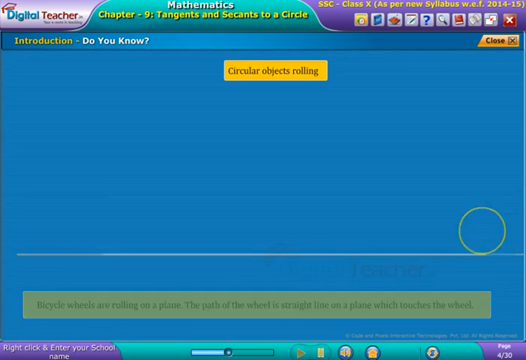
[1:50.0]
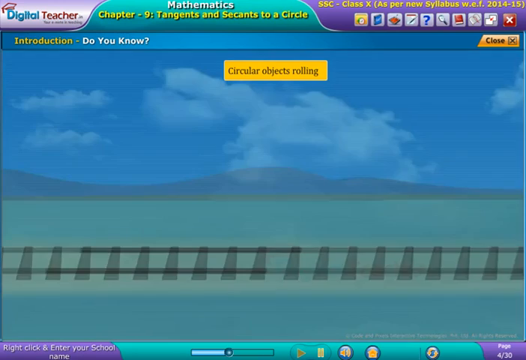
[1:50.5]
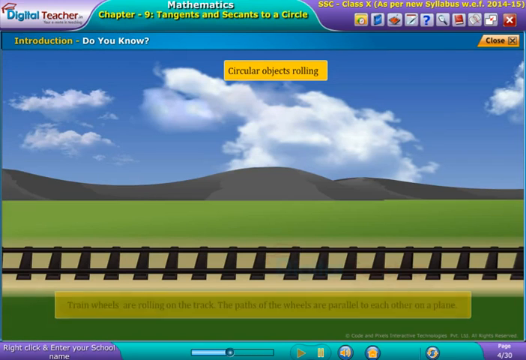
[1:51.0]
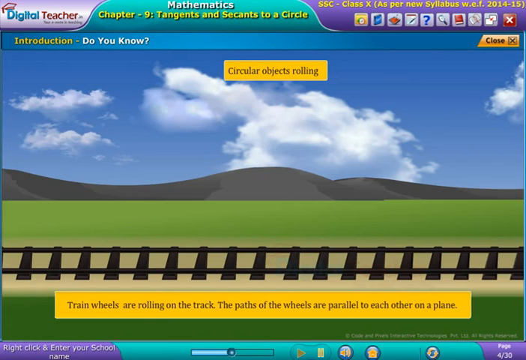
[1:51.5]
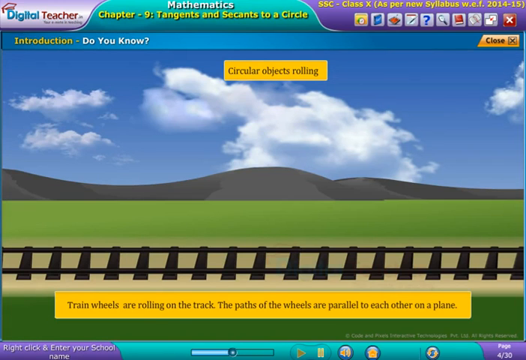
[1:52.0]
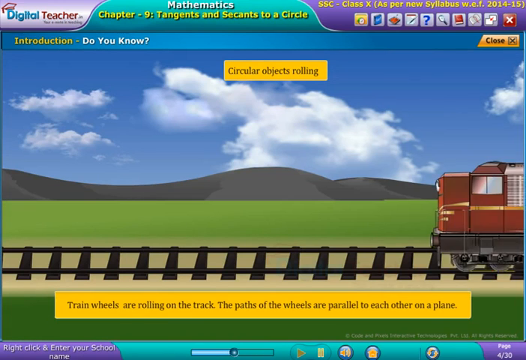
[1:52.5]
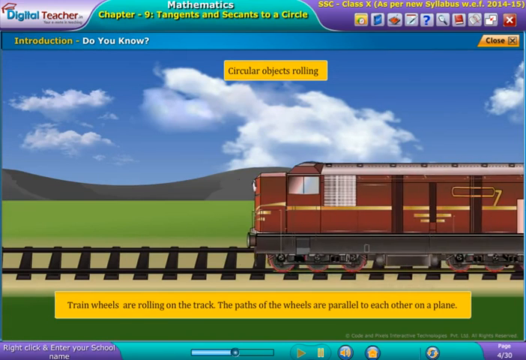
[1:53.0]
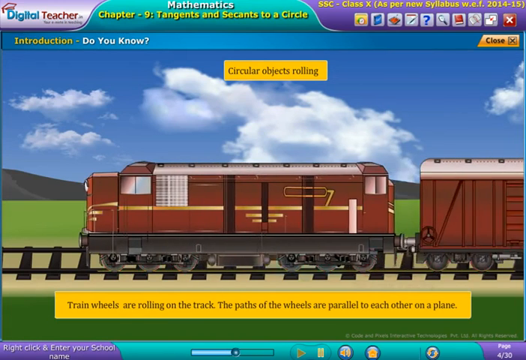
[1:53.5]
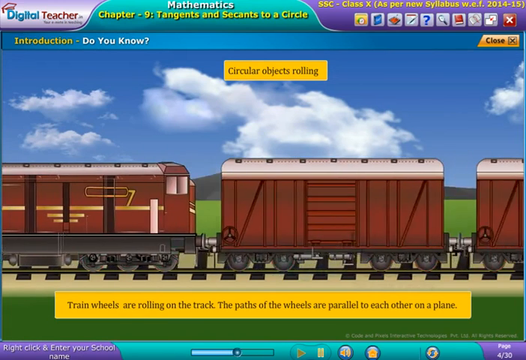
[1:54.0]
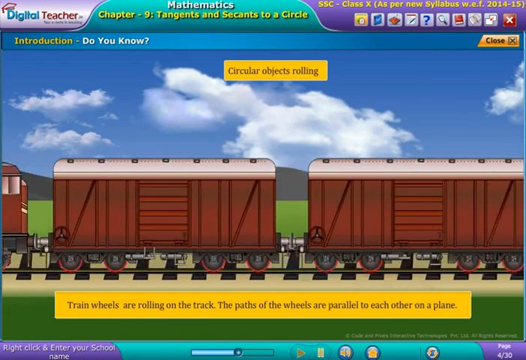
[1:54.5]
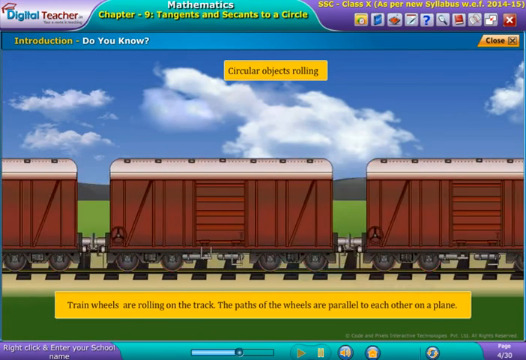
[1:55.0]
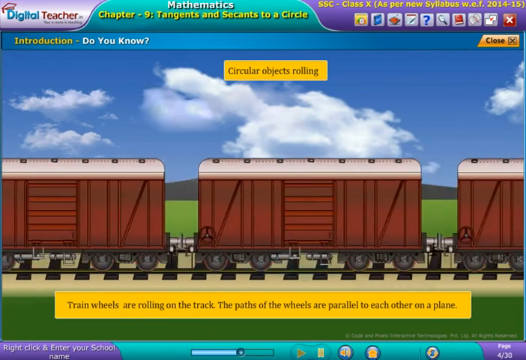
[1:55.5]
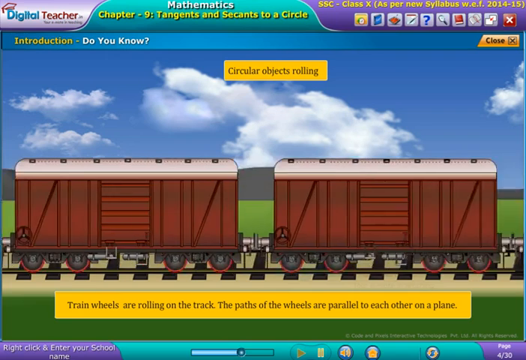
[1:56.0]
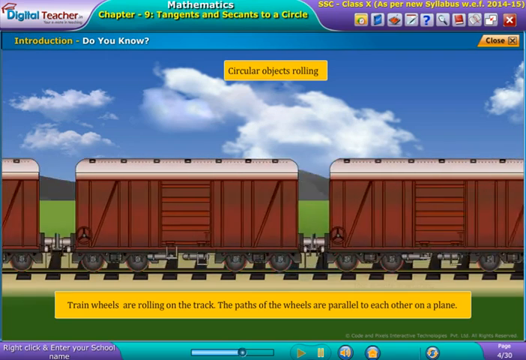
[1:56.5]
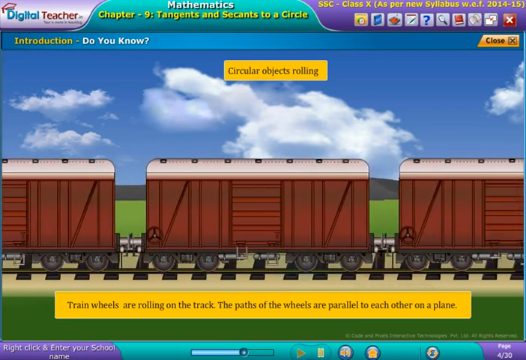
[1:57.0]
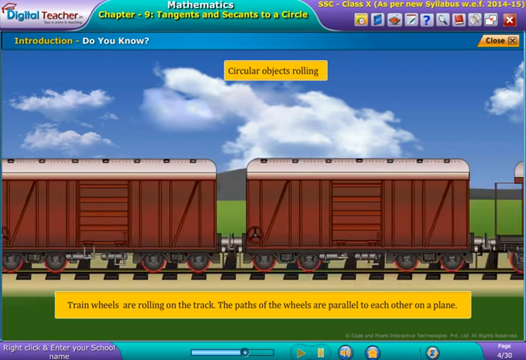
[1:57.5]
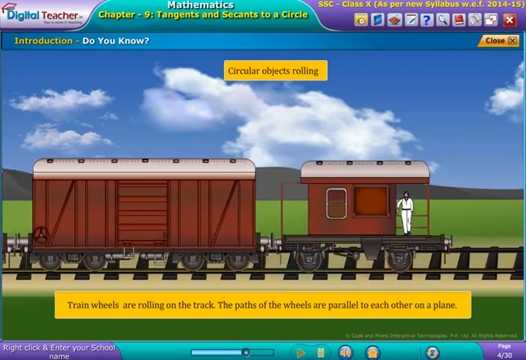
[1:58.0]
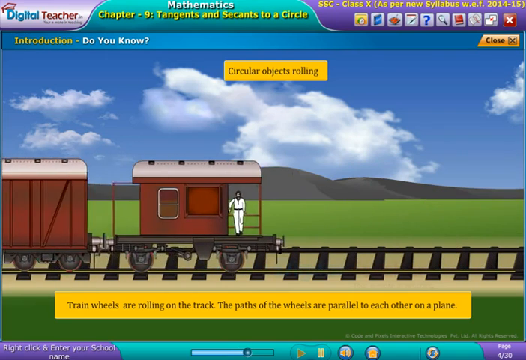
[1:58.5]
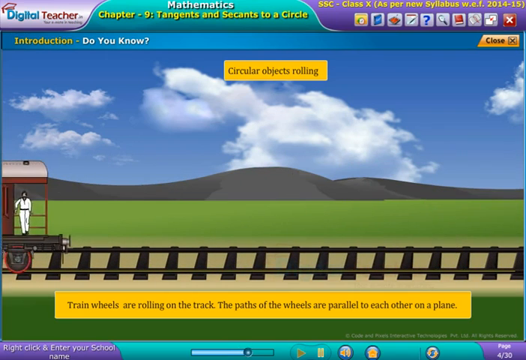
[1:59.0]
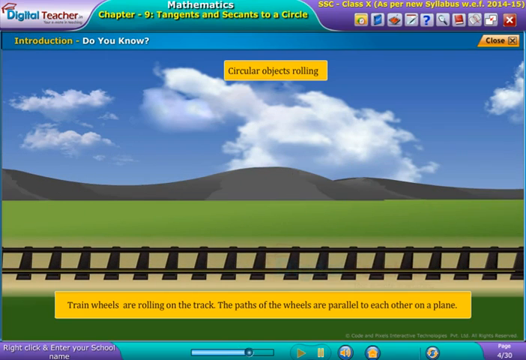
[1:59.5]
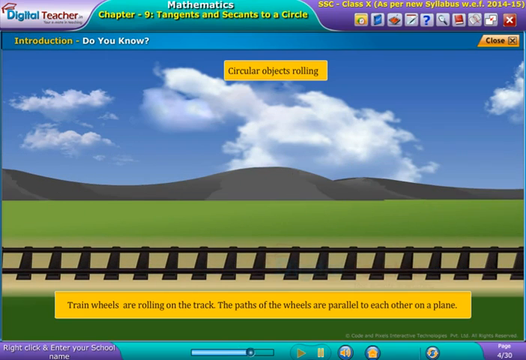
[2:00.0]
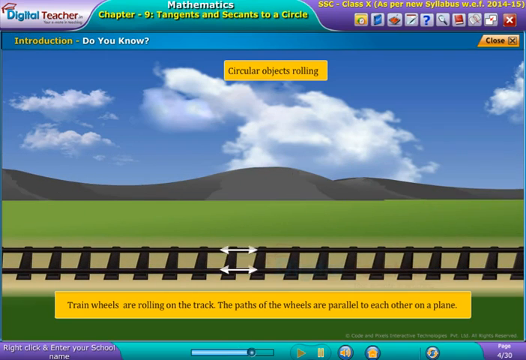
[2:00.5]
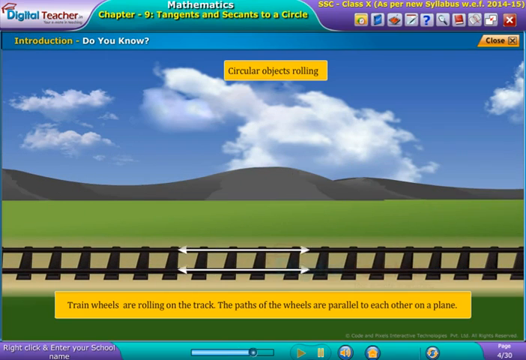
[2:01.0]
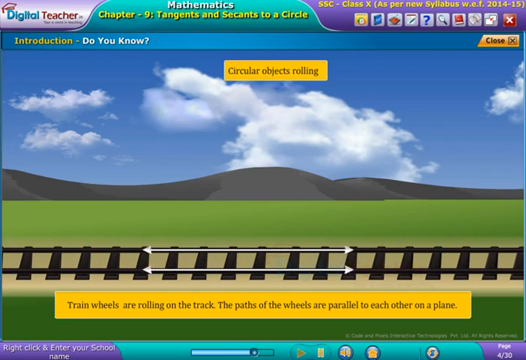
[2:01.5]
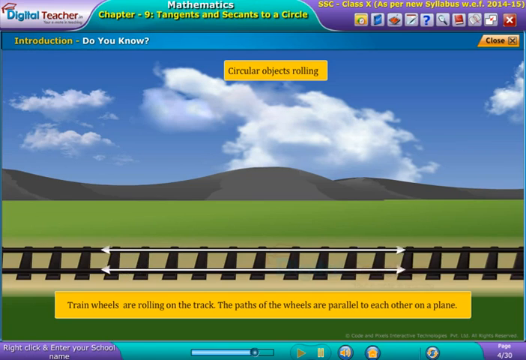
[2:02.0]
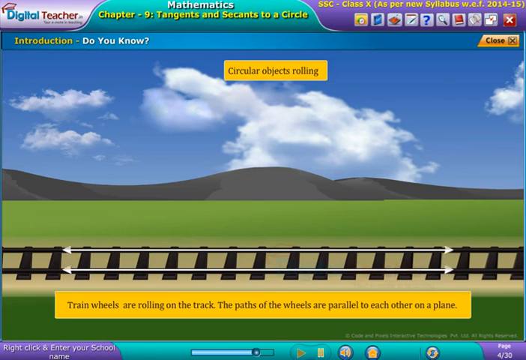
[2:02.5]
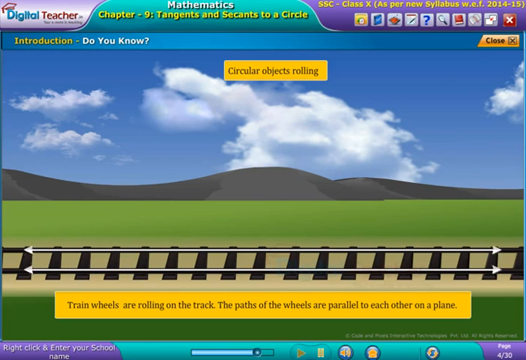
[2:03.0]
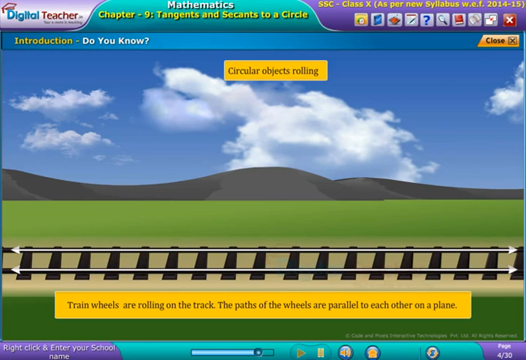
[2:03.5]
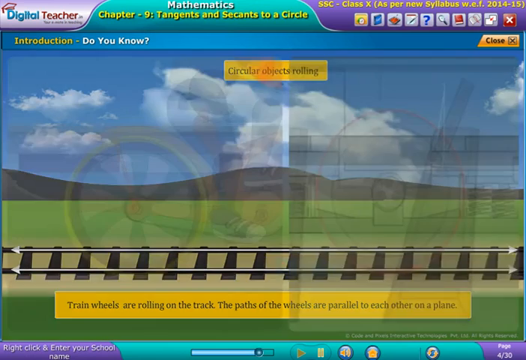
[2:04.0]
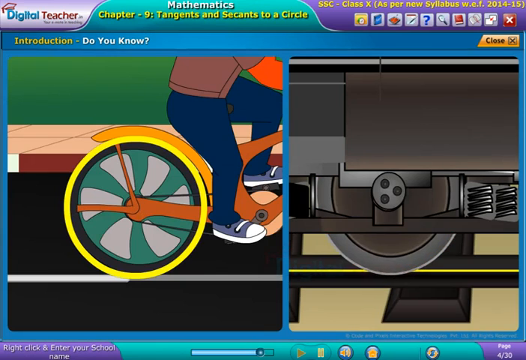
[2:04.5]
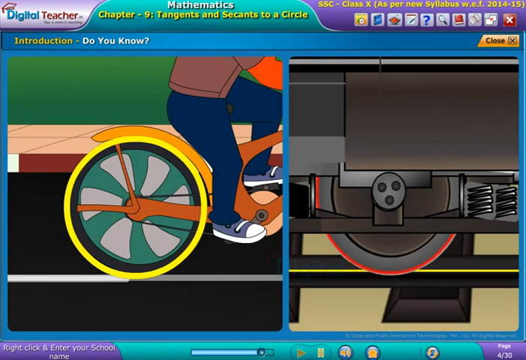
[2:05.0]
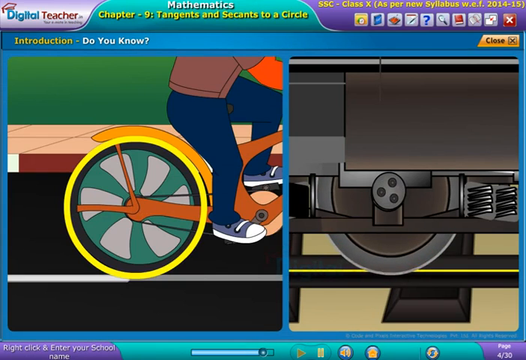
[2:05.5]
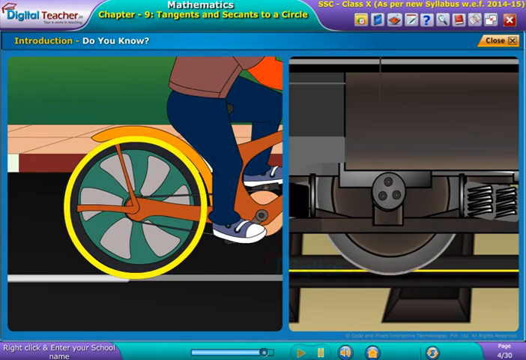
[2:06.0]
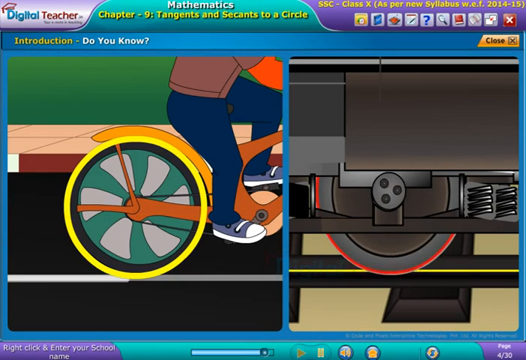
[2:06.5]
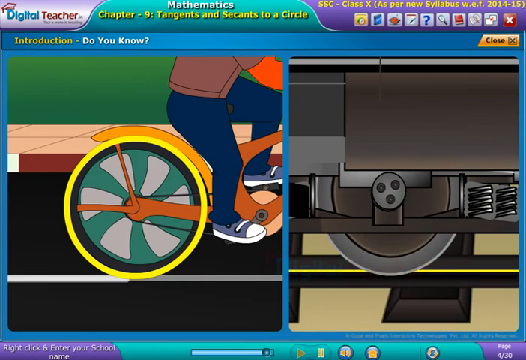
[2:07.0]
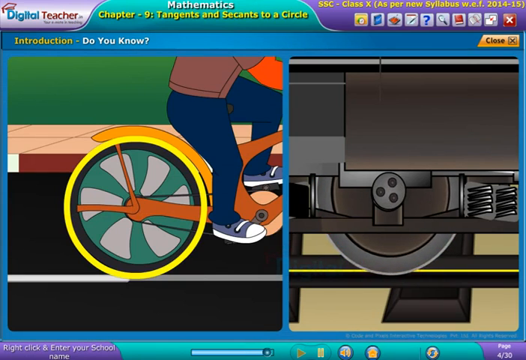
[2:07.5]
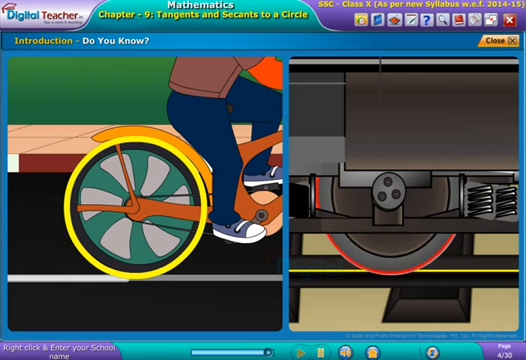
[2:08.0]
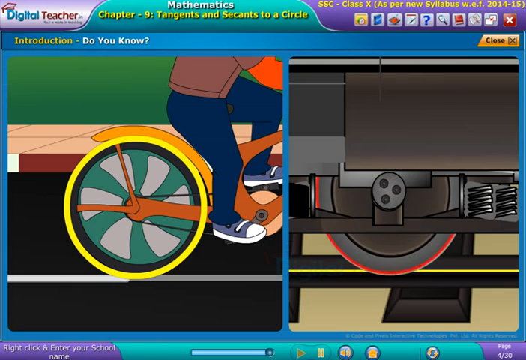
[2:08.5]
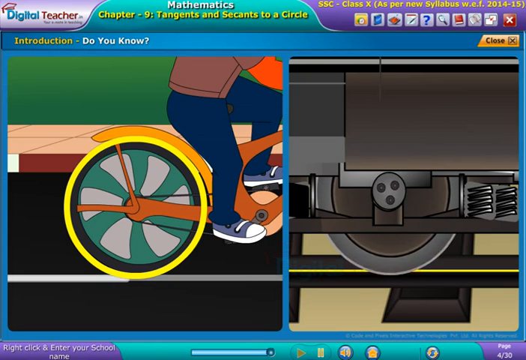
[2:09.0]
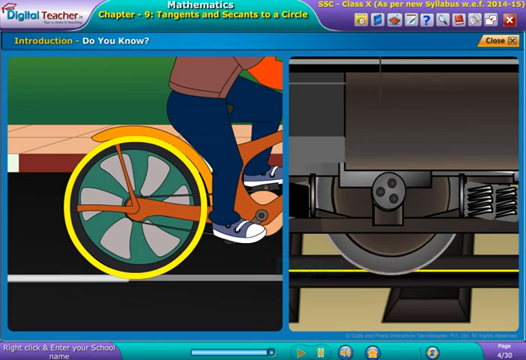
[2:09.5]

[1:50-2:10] A train chugs along to the left. It is red with a white top and some yellow lines in the middle. At the end, a man dressed in white stands at the very end of the train as it goes by. White lines then spread from left to right across the train tracks to show the plane they are on and the angle they are going at. A comparison follows, with the boy's bike wheels on the left and the train's wheels on the right, showing that they are similar in how they roll on a solid plane. The view is very zoomed in.